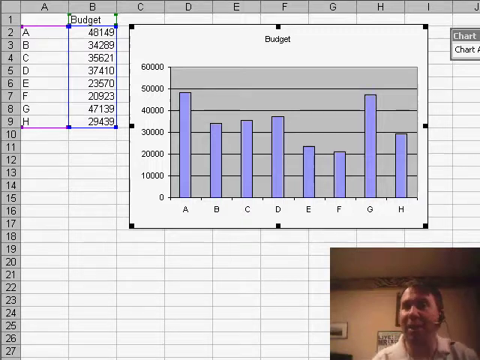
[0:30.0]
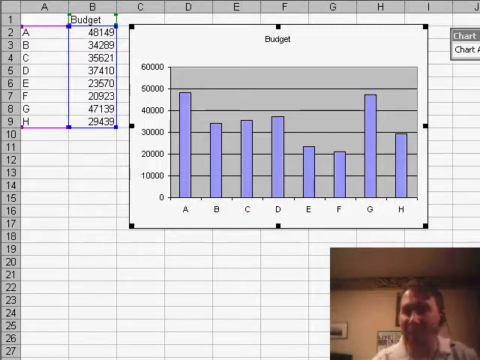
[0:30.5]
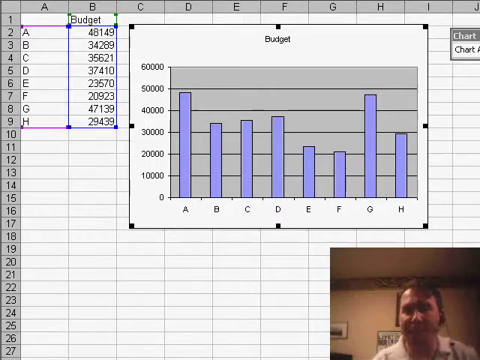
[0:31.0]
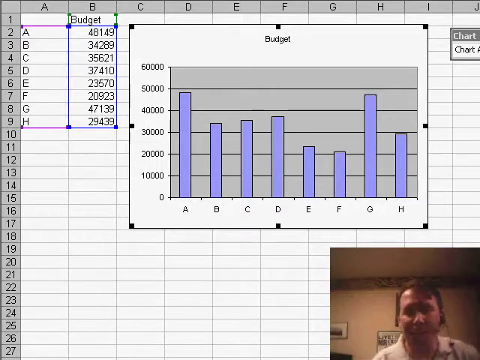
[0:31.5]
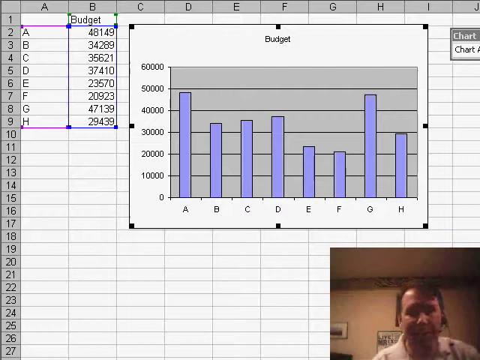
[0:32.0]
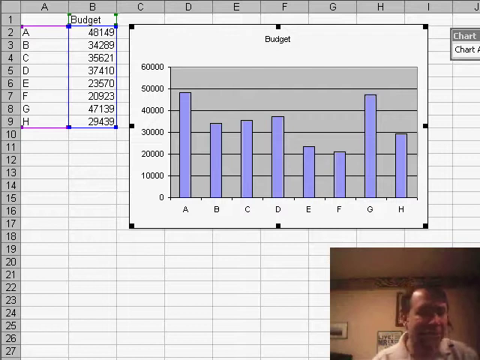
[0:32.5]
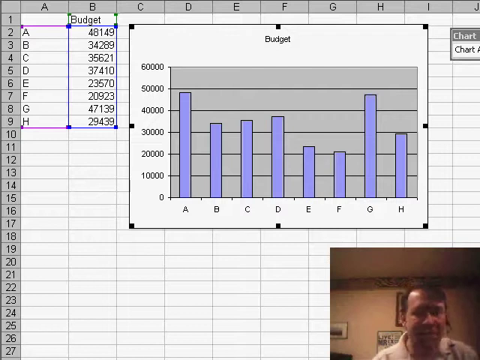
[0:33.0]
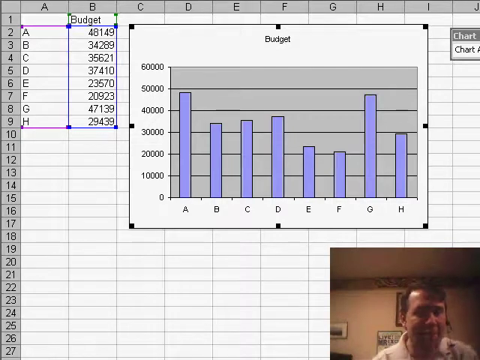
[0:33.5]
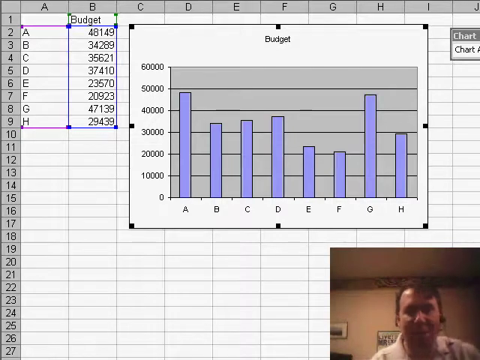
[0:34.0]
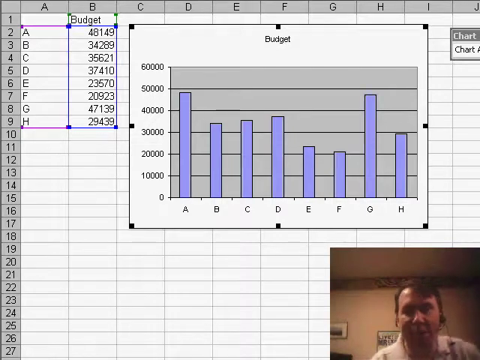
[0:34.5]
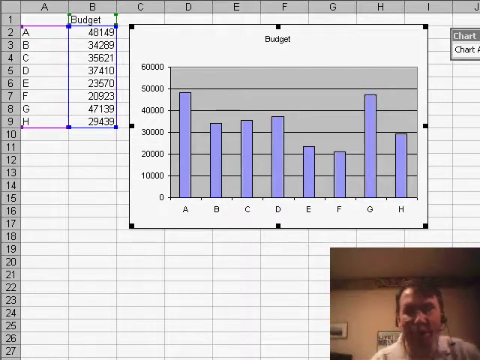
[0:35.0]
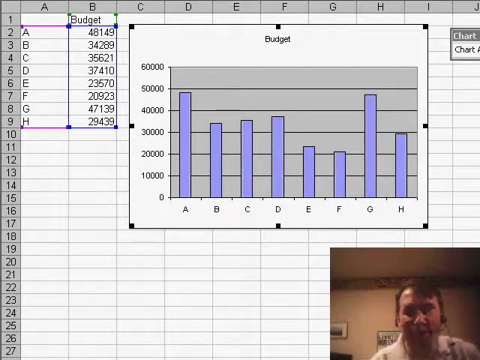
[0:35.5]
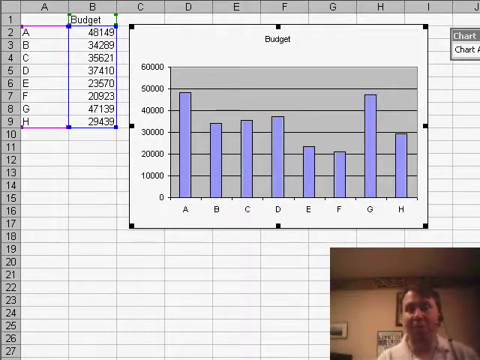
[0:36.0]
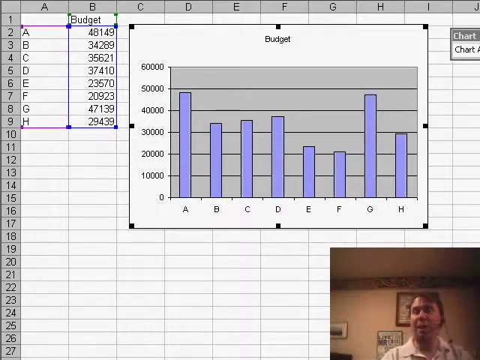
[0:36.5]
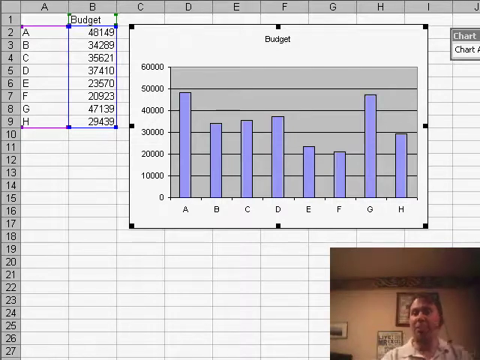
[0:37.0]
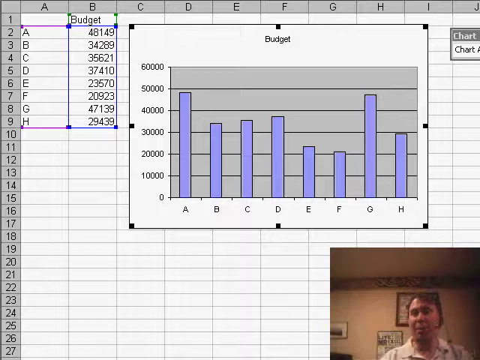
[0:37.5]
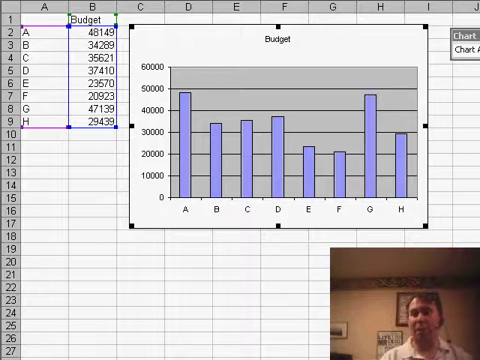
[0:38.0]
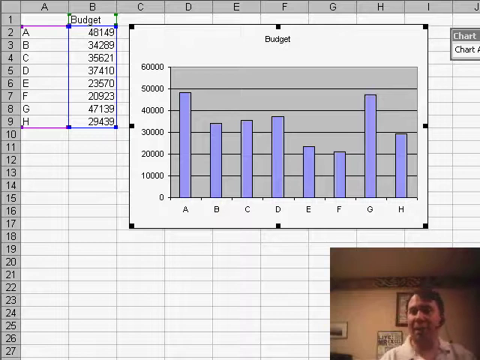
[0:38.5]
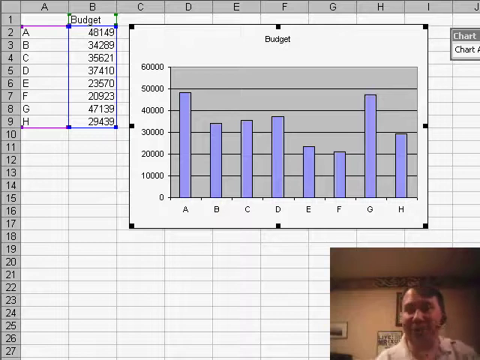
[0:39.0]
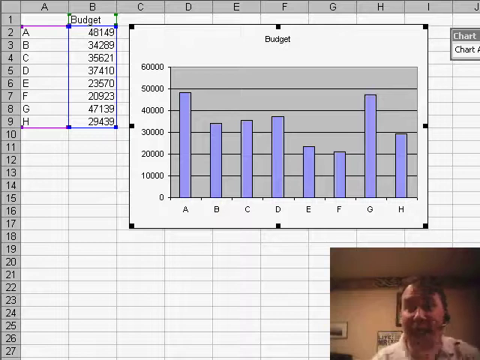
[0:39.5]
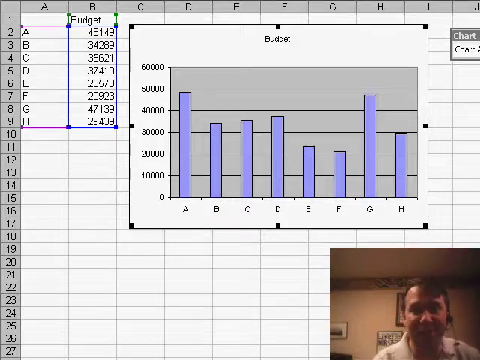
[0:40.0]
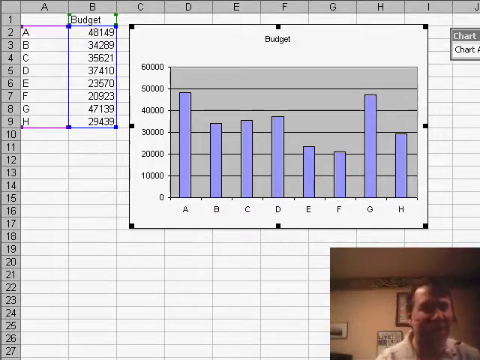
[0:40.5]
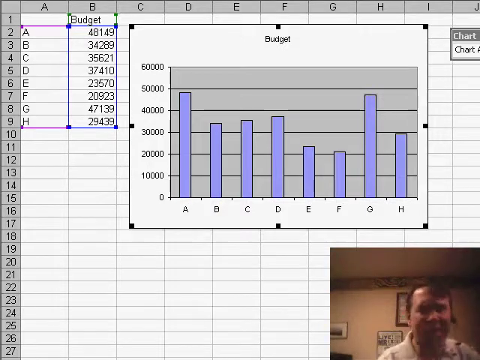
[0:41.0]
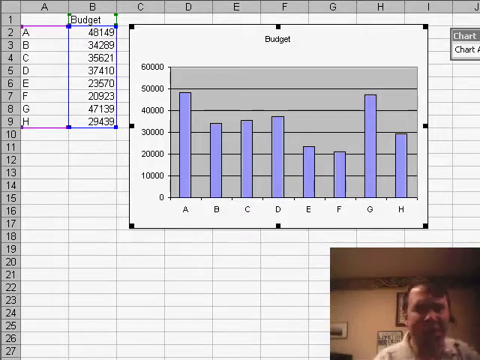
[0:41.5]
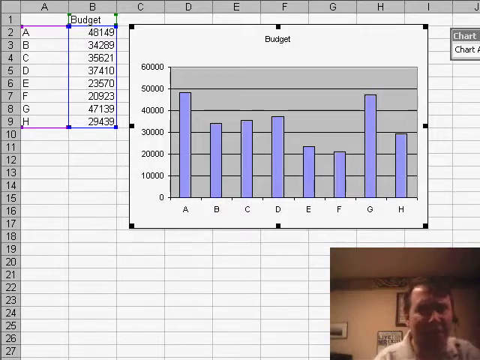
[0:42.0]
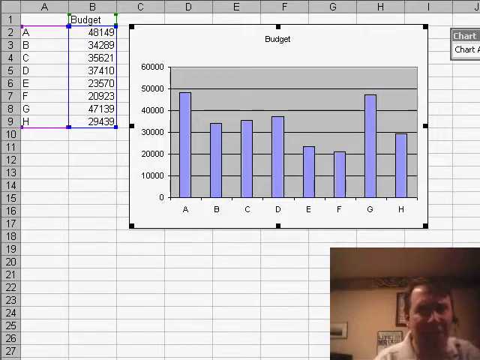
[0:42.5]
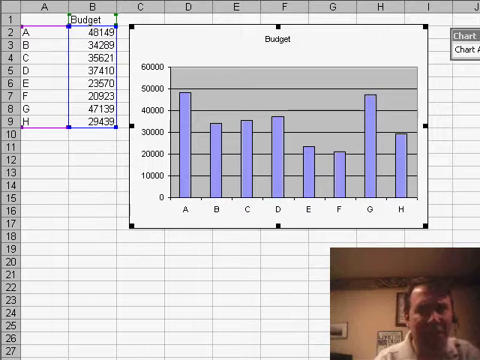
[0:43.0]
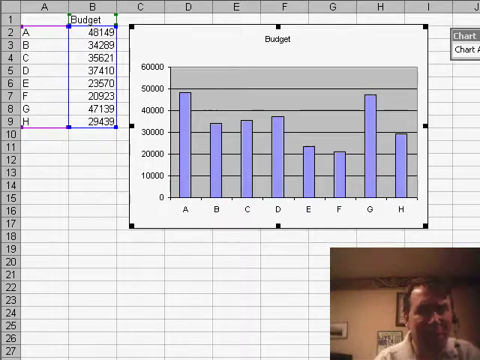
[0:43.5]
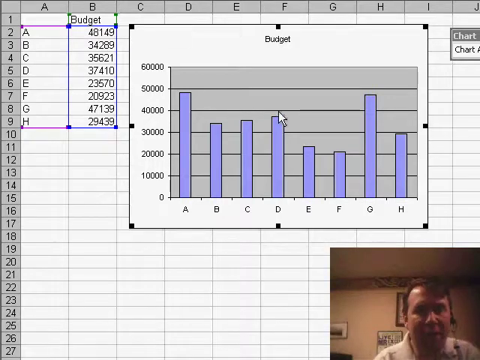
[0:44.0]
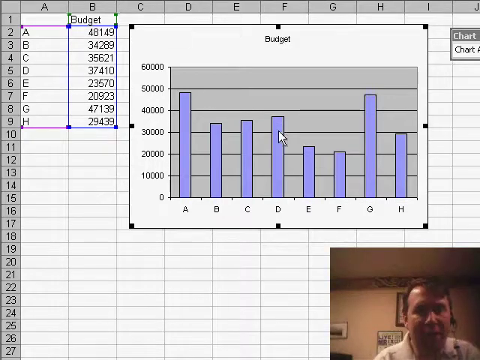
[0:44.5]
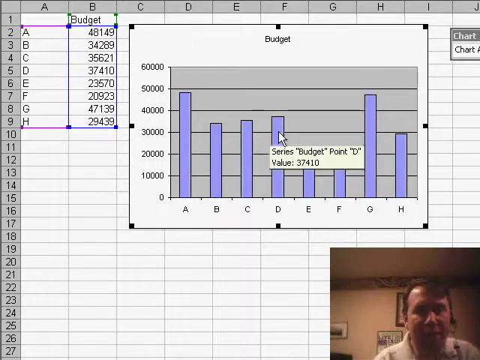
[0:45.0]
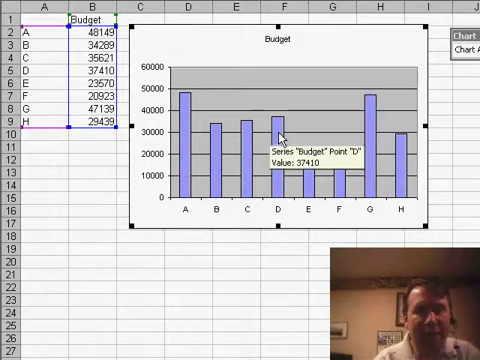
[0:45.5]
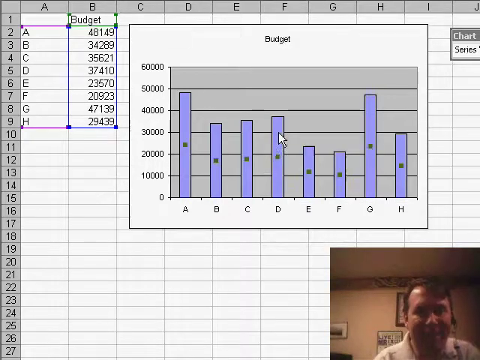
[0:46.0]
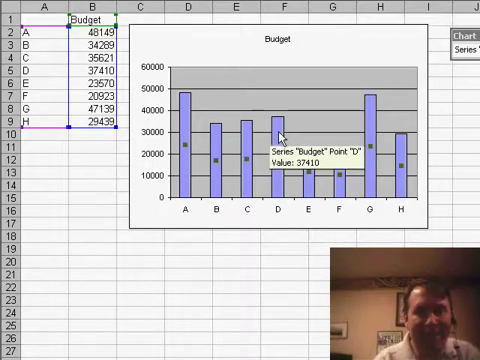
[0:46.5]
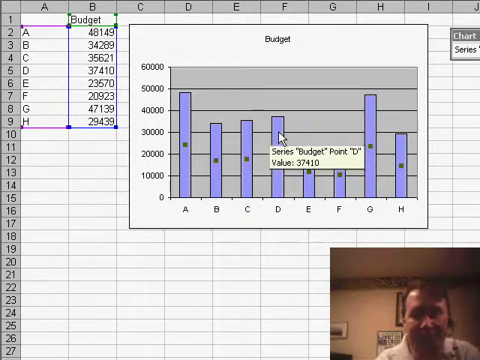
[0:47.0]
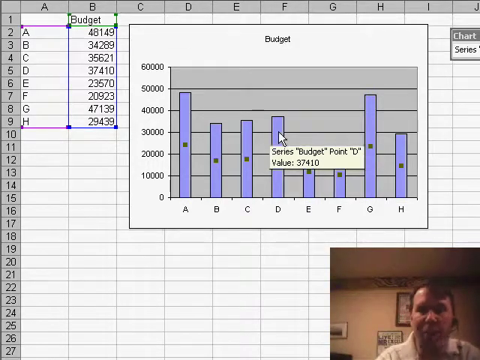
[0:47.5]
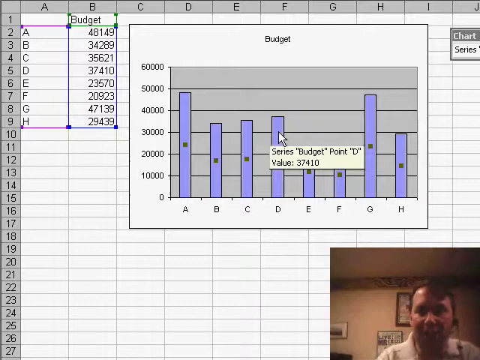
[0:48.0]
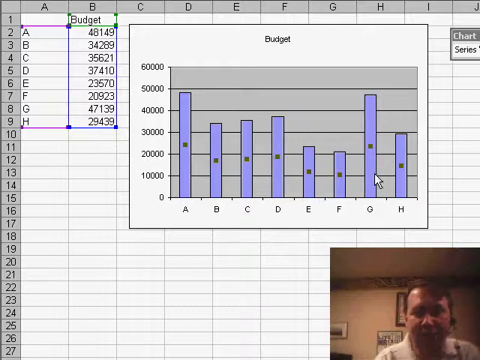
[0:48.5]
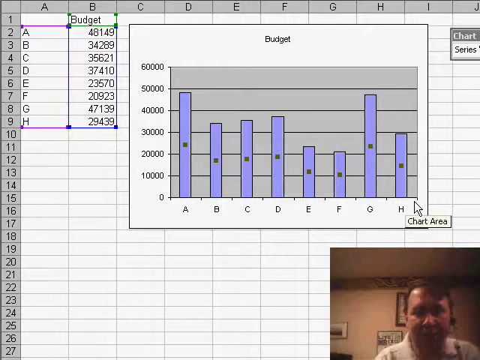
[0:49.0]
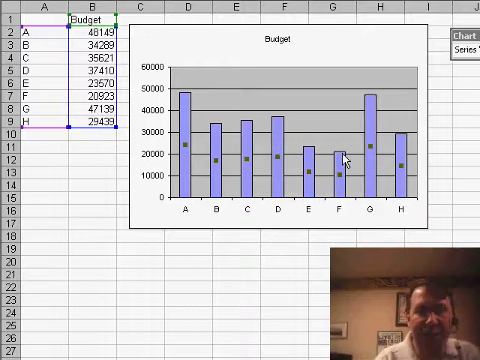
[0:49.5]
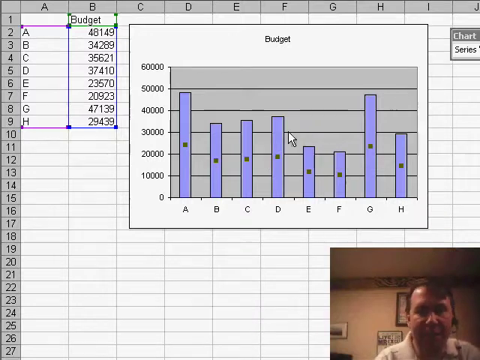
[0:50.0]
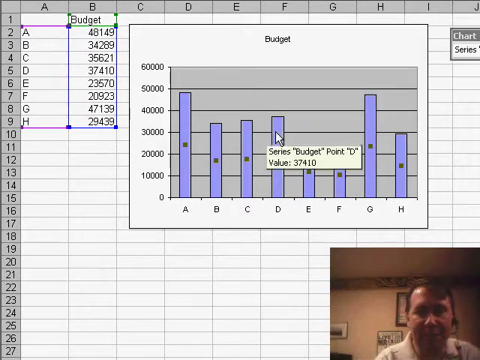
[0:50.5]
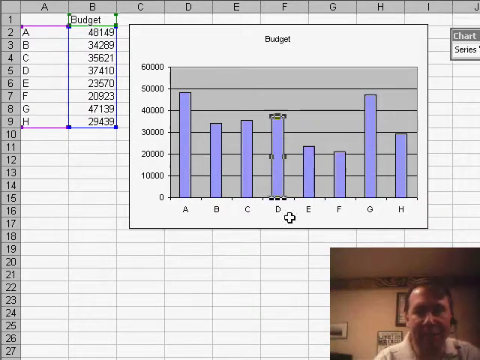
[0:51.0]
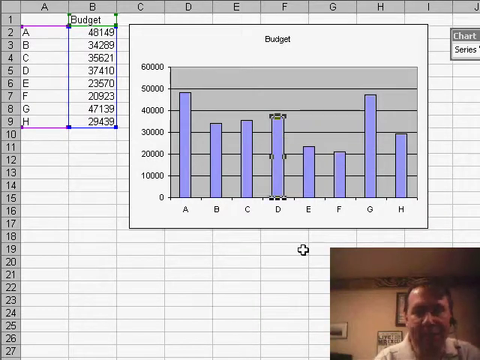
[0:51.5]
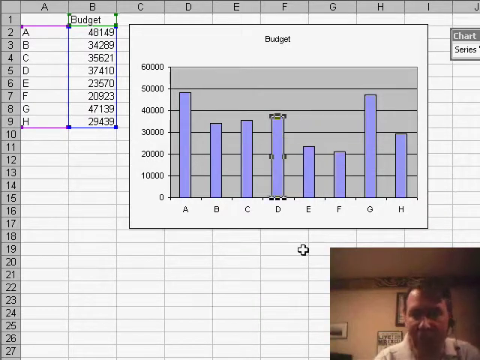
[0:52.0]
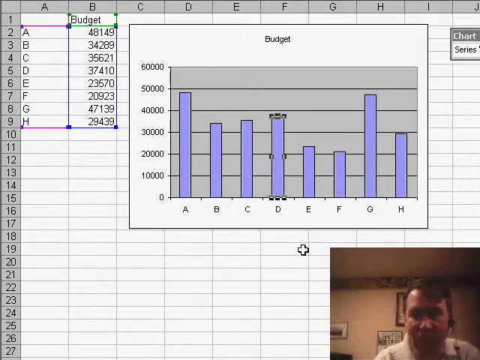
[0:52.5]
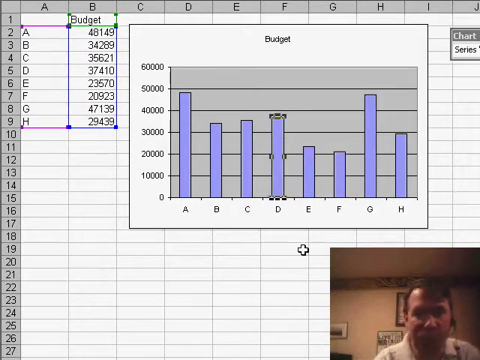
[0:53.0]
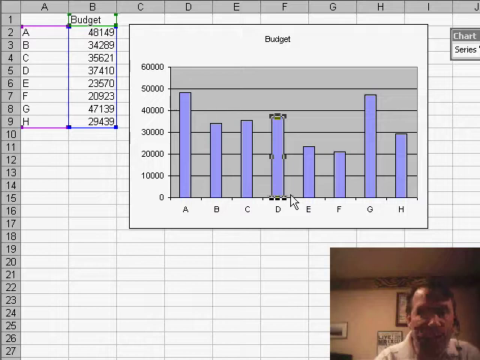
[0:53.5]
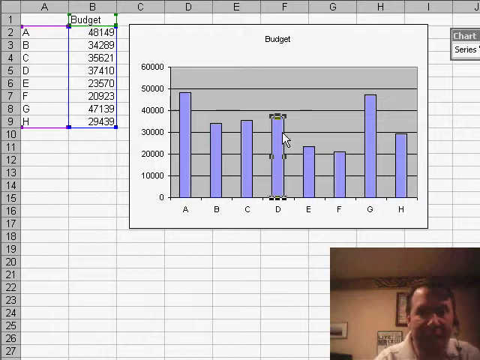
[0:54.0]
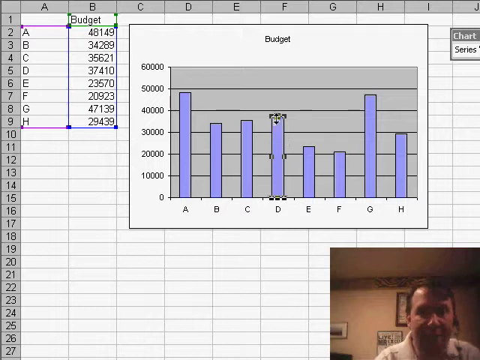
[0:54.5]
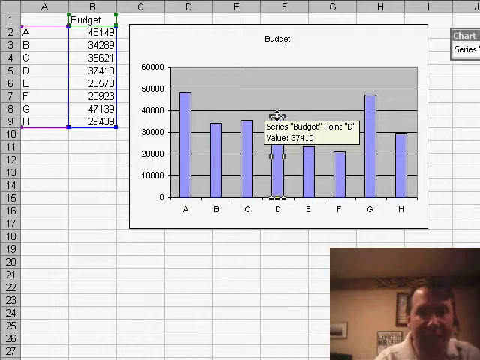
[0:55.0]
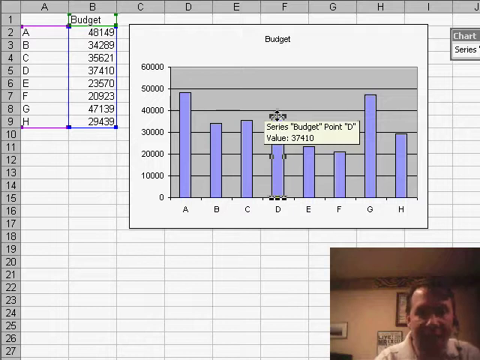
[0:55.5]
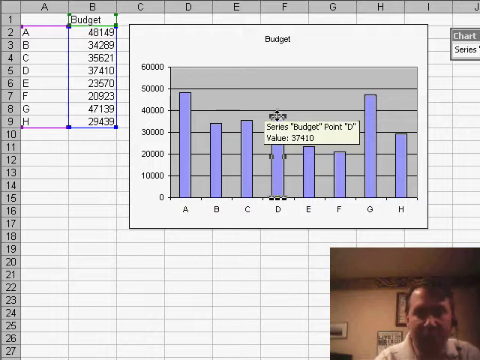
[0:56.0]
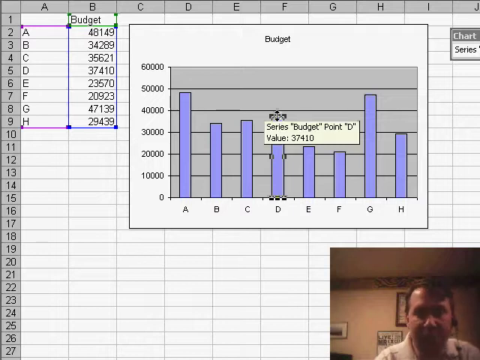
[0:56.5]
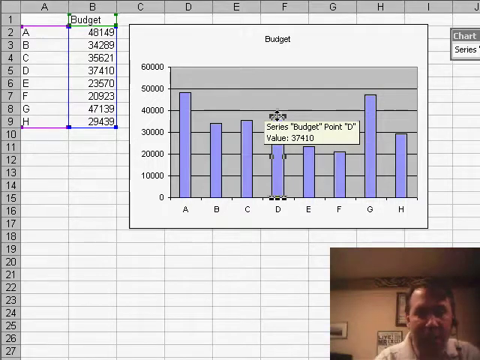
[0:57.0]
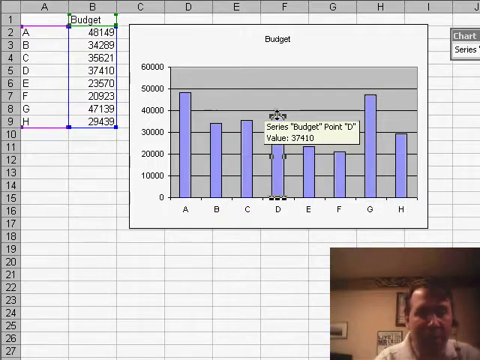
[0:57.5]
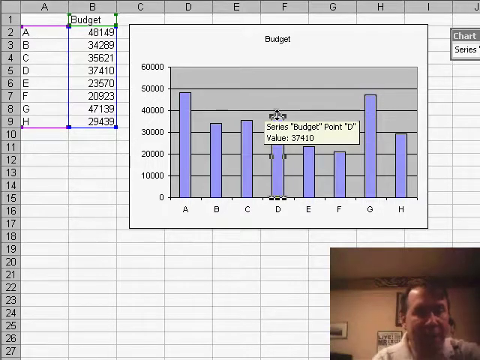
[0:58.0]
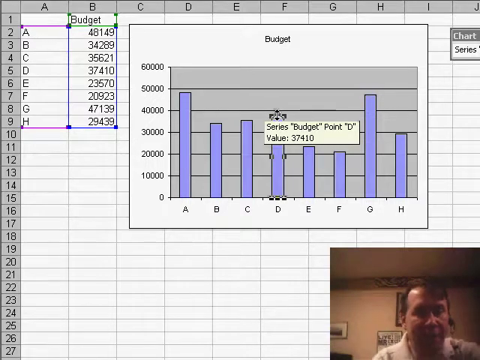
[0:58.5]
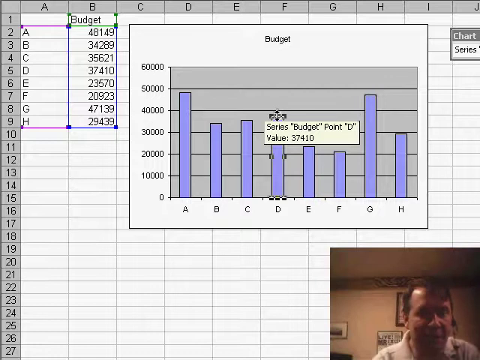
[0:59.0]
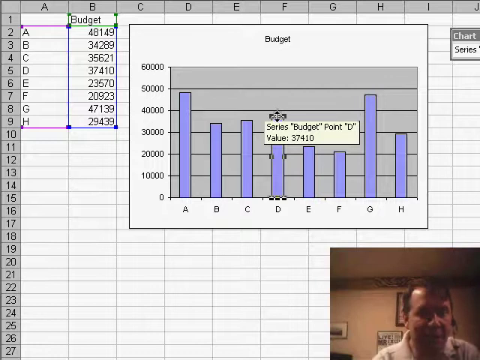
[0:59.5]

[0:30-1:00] On the left of the Excel sheet, "budget" is typed under column B. Column letters A, B, C, D, E, F, G, H and I run across the top, and row numbers 1, 2, 3, 4 and 5 run down the far left. The budget list starts at row 2 under column A and lists the letters A through H, and under "budget", across from each letter, are the different budget amounts as numbers. Next to that, starting under column B, a rectangle extends down to row 17 and over to column I; it is a bar graph of the entered data. At the bottom right, the man wearing a headset speaks; he looks like he is in a room, talking to a camera, and he points at the graph.